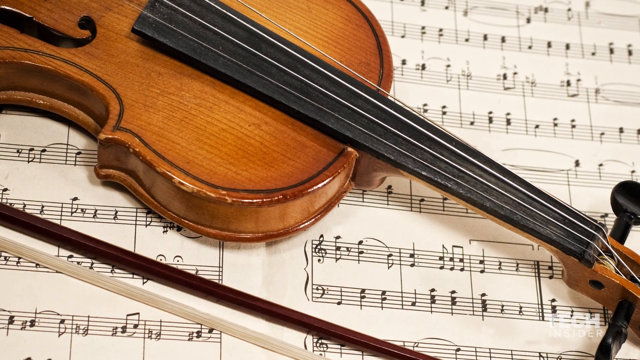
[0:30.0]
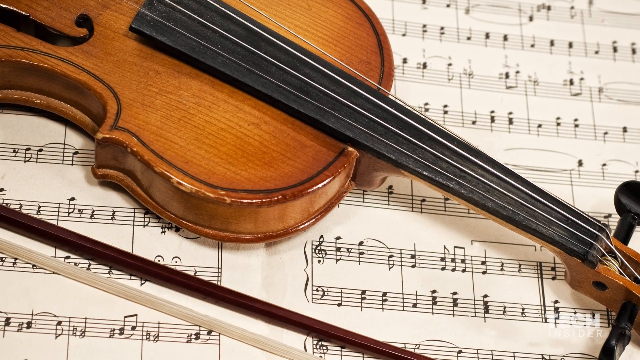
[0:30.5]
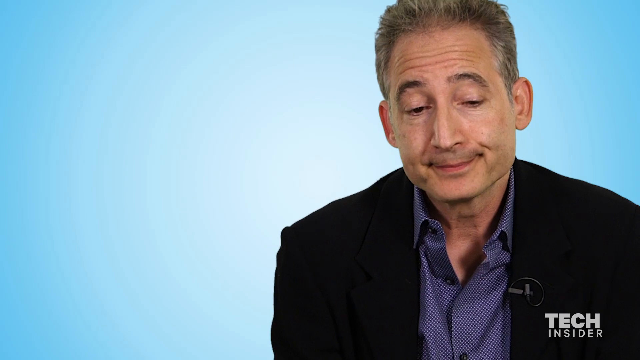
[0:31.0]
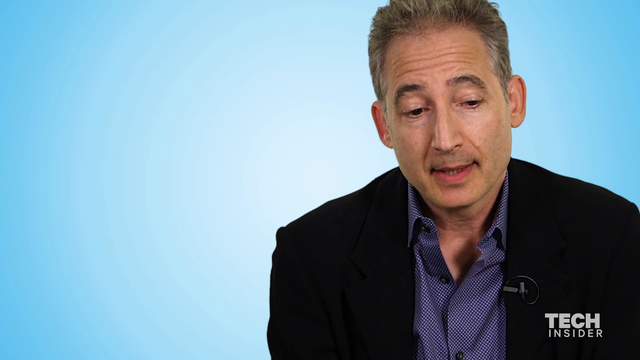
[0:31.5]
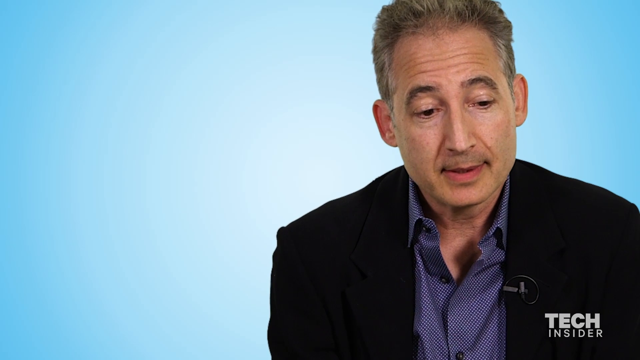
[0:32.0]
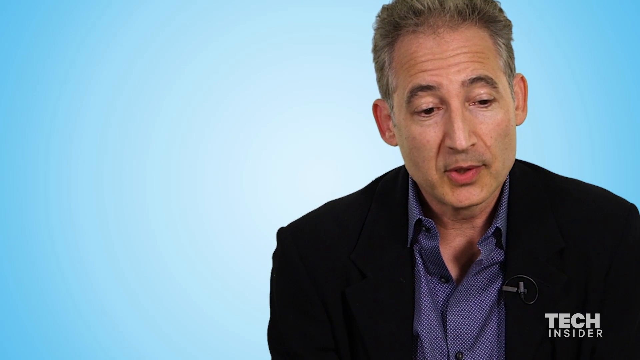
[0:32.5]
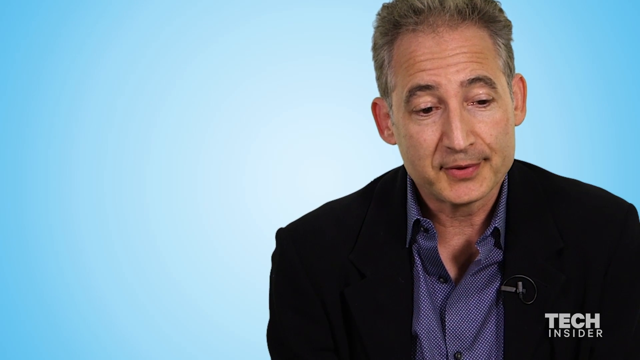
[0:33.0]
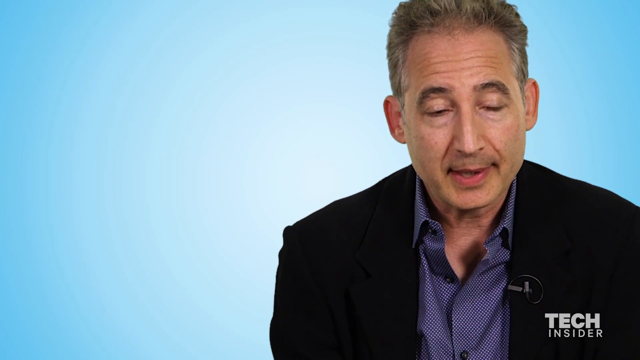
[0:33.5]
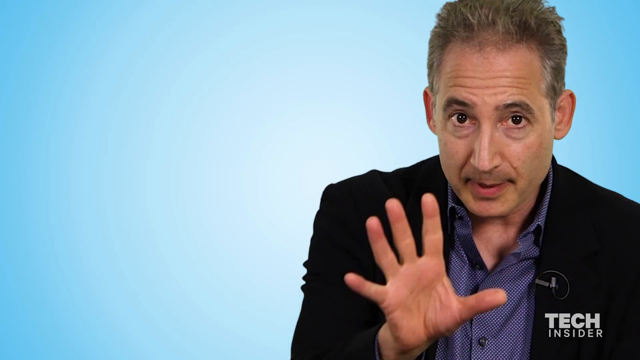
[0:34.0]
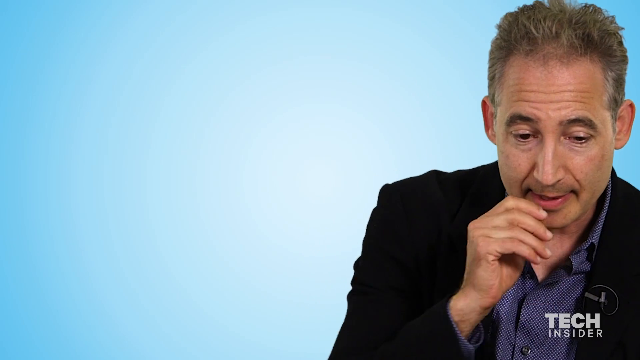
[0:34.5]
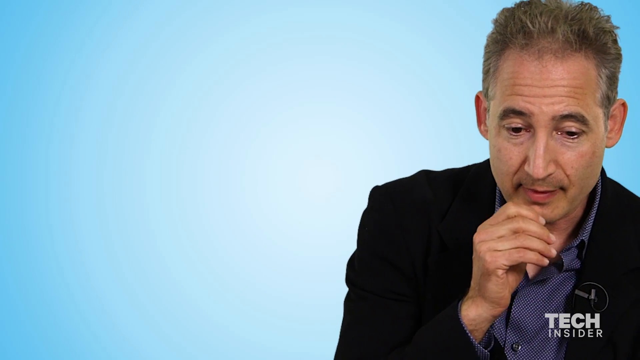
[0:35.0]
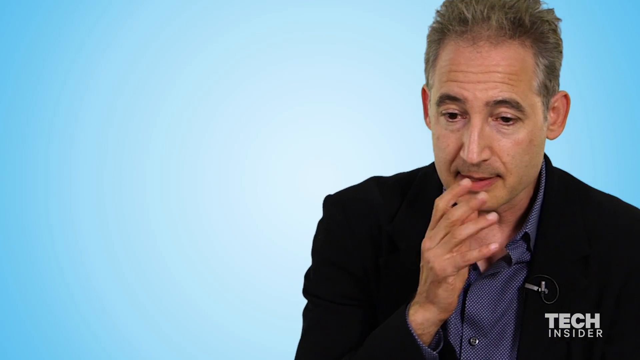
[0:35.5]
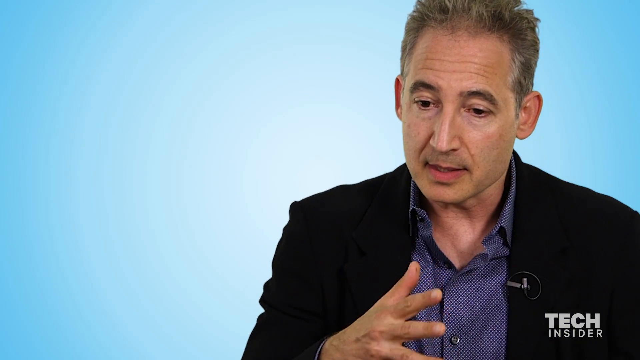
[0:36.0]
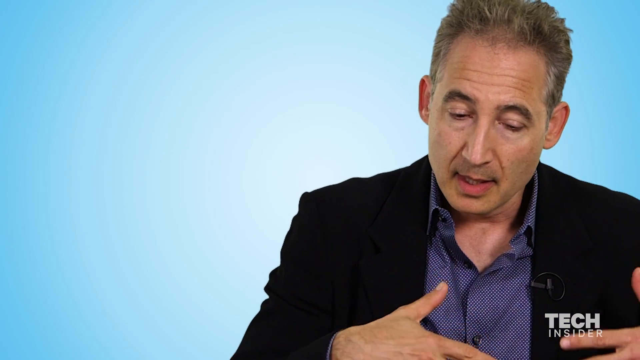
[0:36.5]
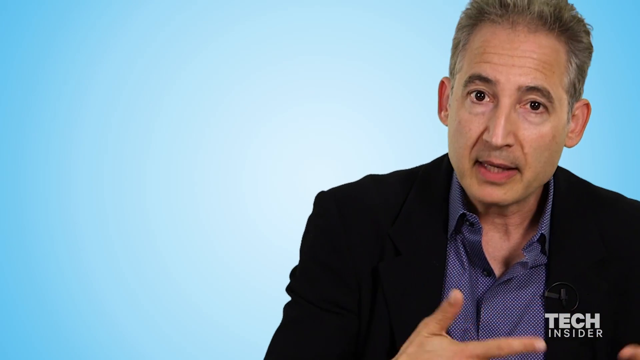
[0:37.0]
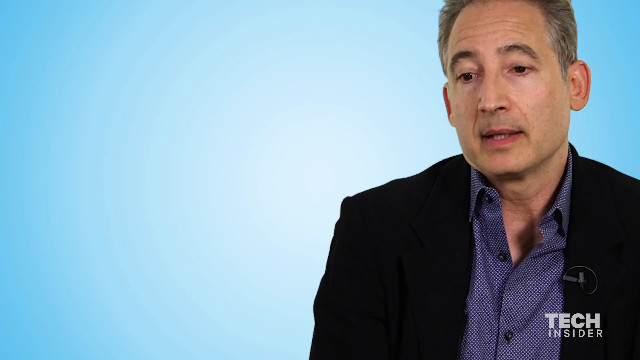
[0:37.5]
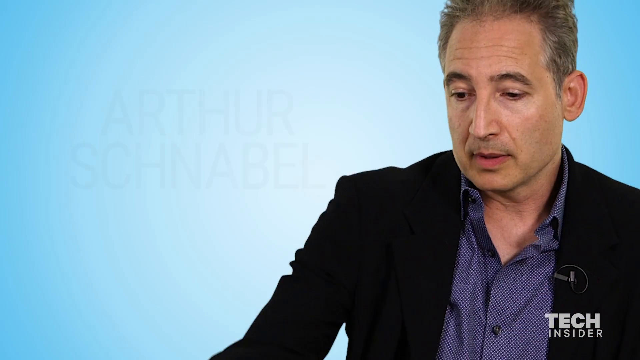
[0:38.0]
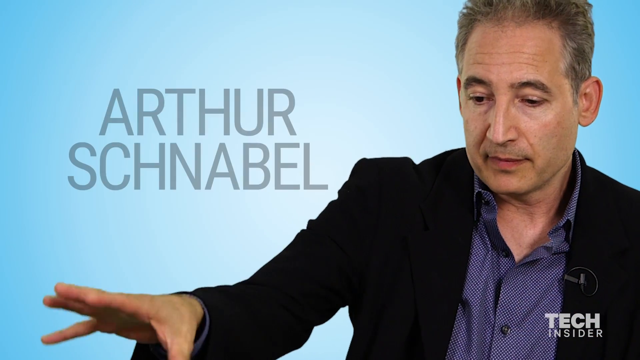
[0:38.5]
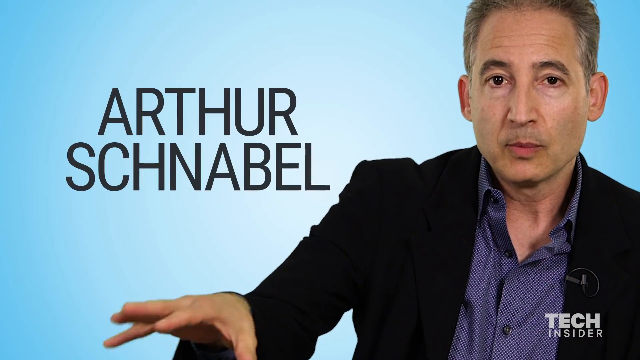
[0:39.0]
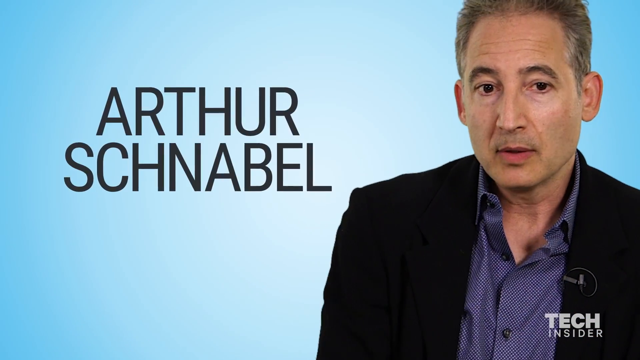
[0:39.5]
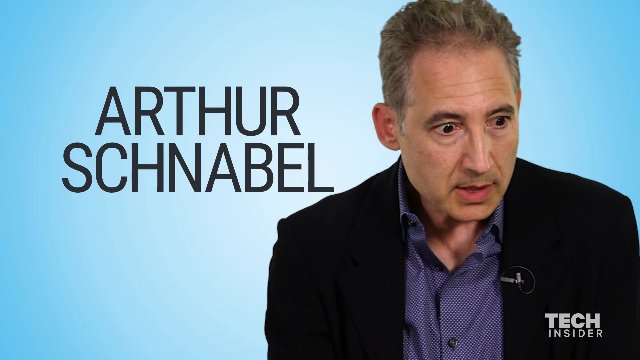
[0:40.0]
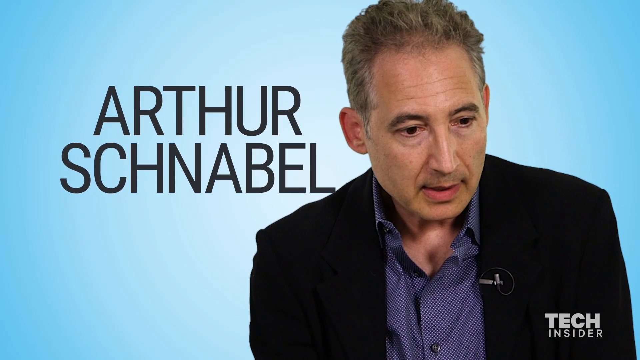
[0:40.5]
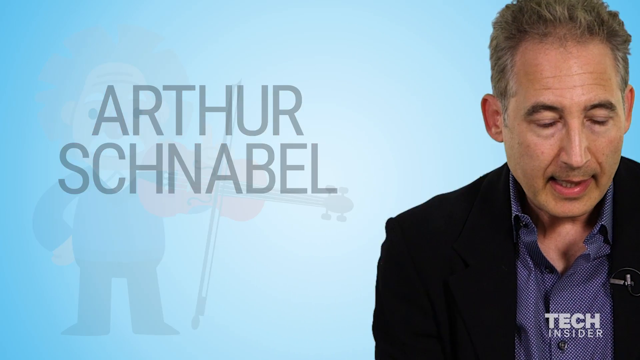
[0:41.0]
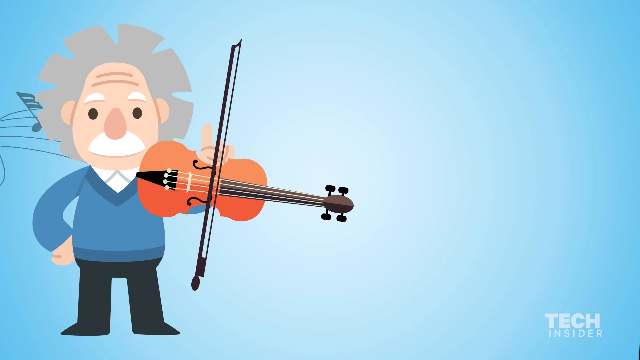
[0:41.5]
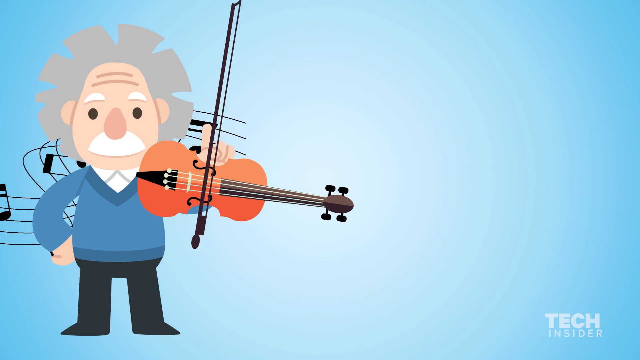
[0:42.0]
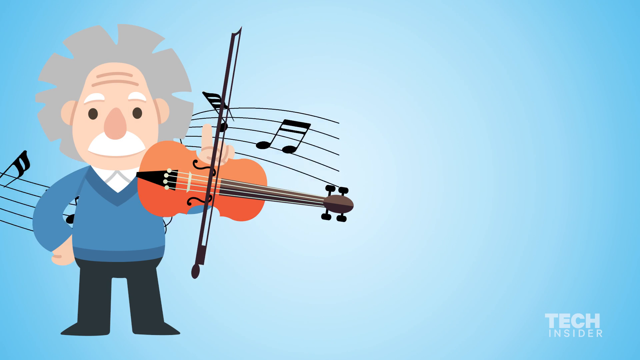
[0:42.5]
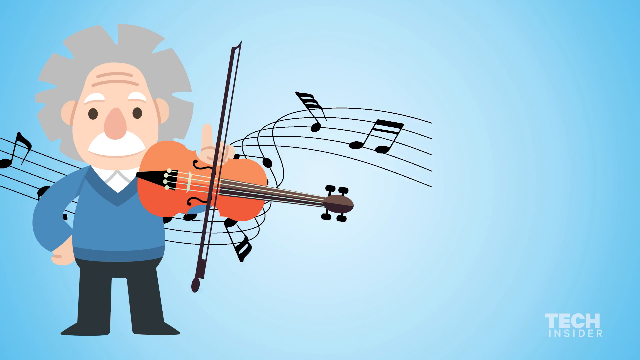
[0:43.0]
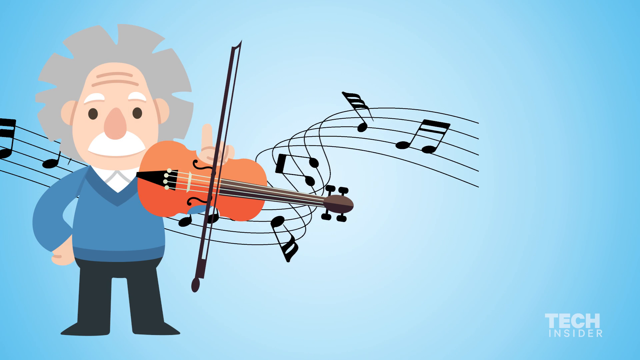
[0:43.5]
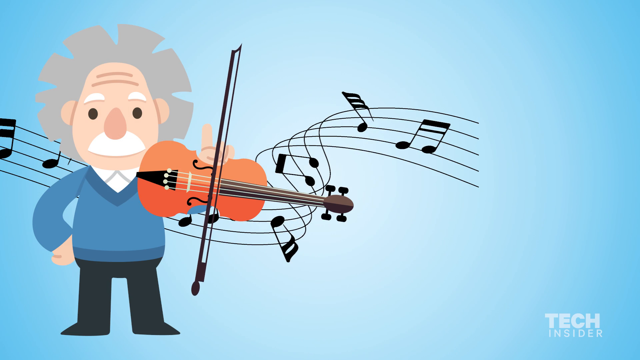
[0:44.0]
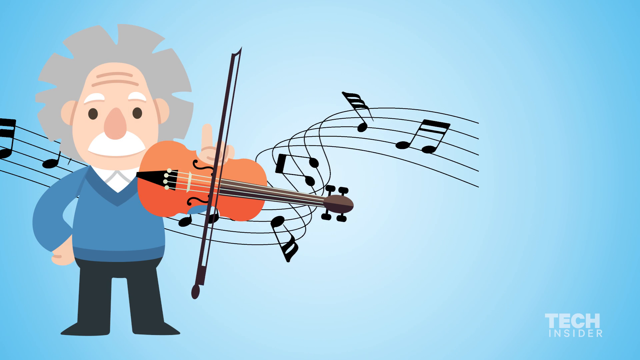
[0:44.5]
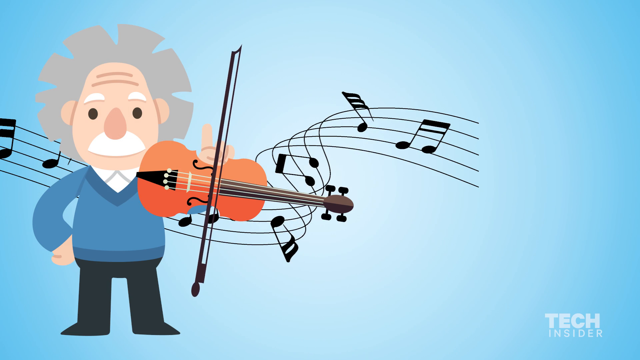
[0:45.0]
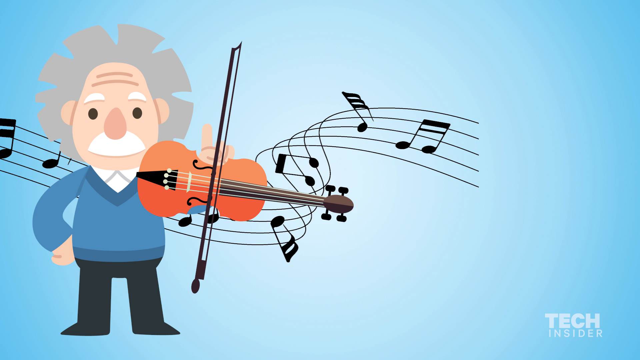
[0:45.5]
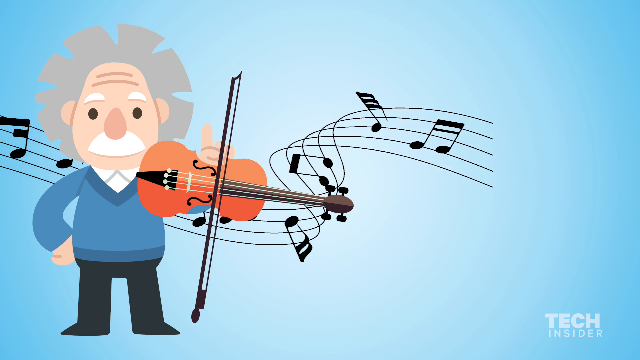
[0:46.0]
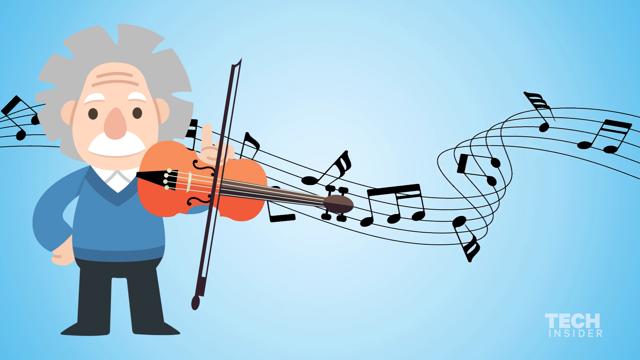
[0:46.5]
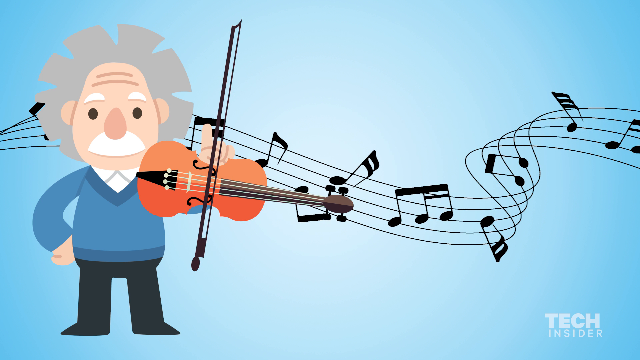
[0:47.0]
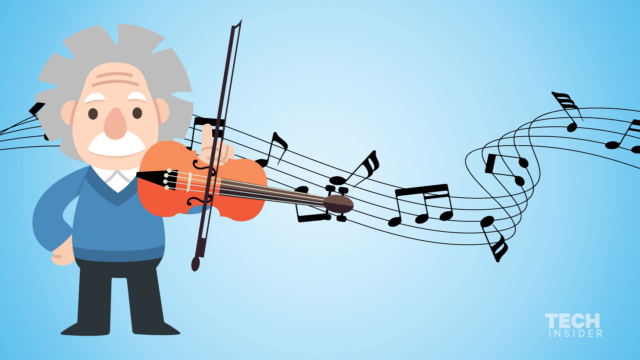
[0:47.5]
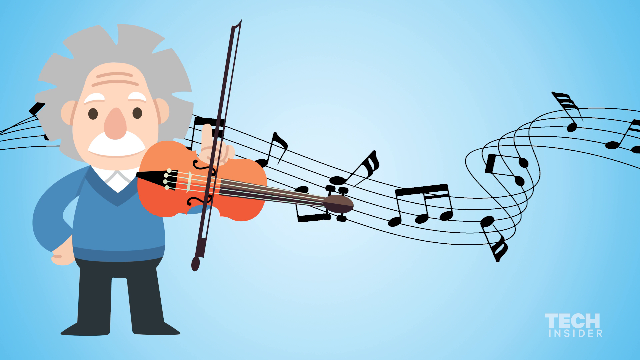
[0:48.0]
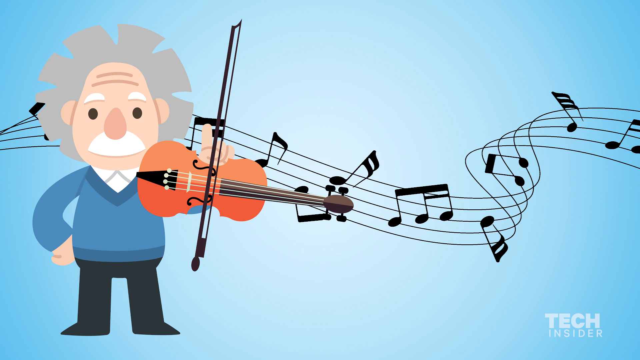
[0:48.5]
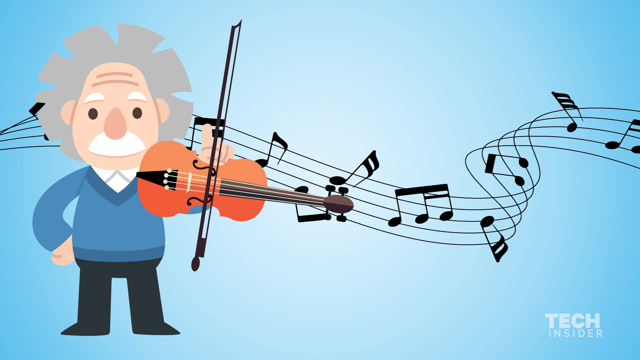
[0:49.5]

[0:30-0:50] The violin and music notes appear for a moment before the video returns to the man who was speaking earlier, apparently Brian Green. He is seen from about the chest up, speaking and using his hands a lot. At one point the name "Artur Schnabel" appears. Then the cartoon of Einstein appears again, sort of holding a violin and playing it, with music notes flowing out after him, on the blue background. After that, the screen is empty.